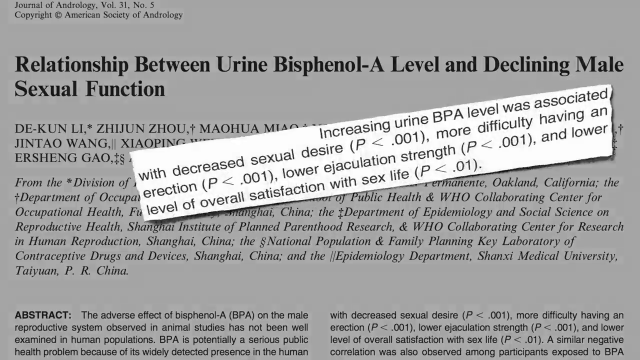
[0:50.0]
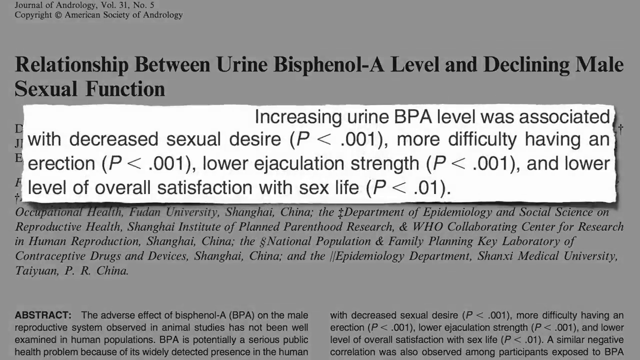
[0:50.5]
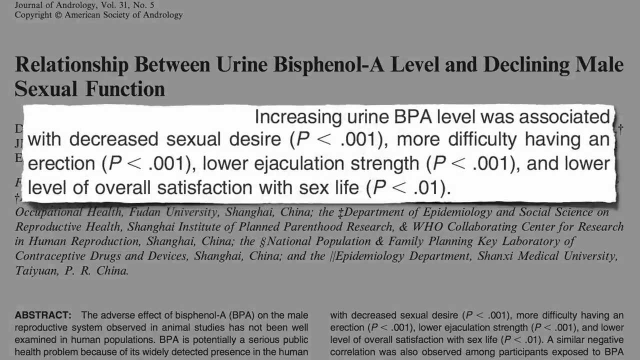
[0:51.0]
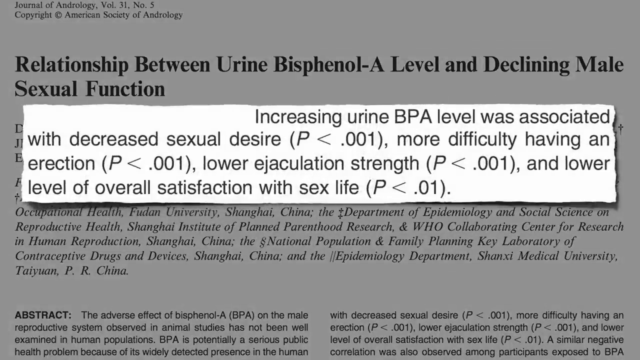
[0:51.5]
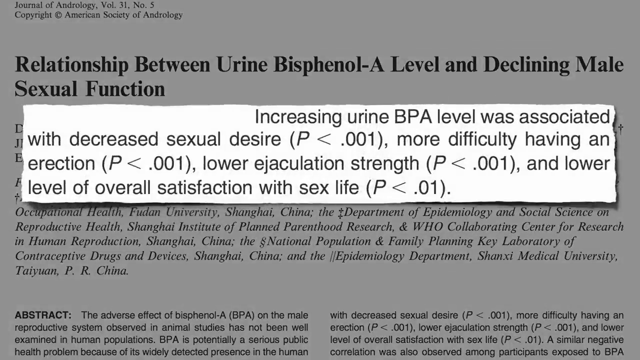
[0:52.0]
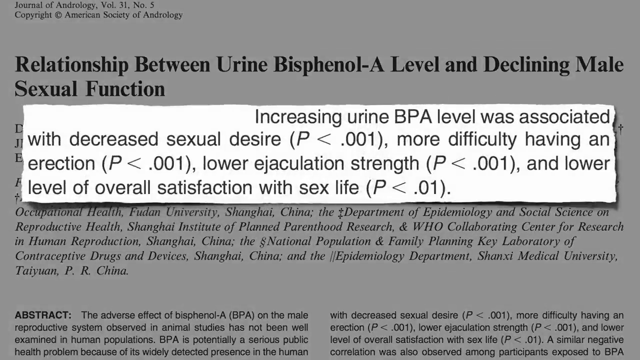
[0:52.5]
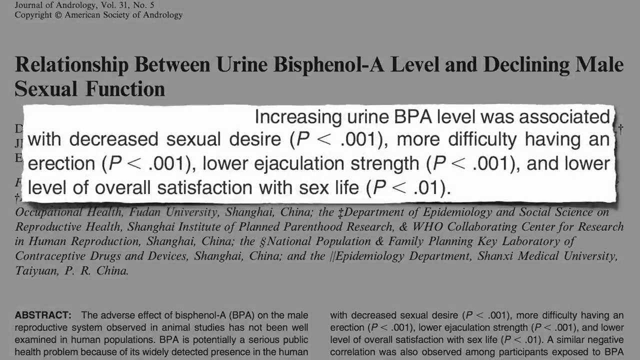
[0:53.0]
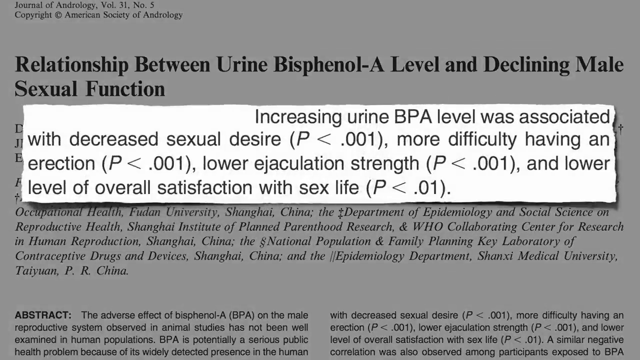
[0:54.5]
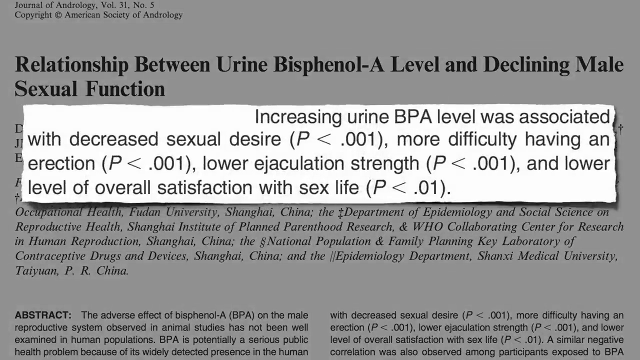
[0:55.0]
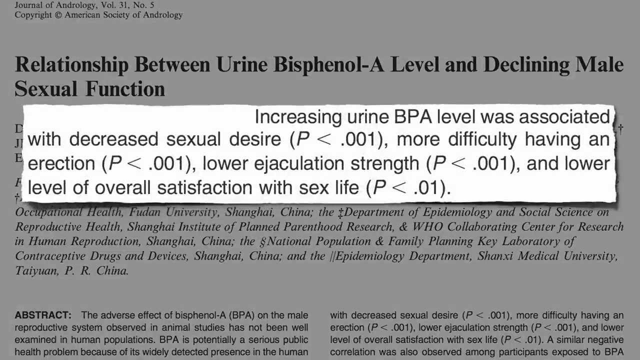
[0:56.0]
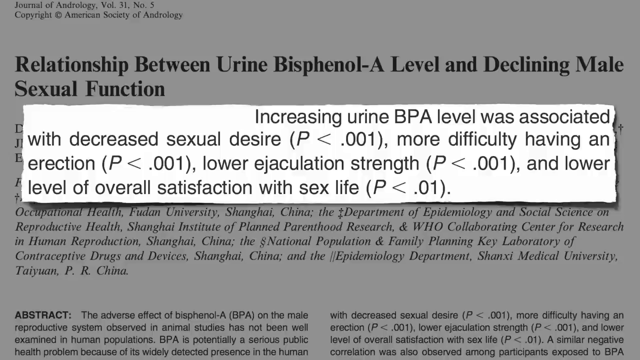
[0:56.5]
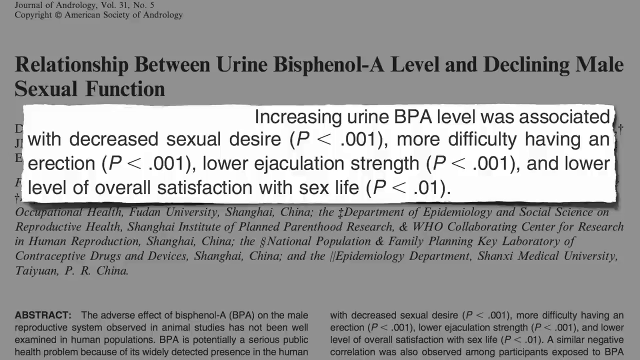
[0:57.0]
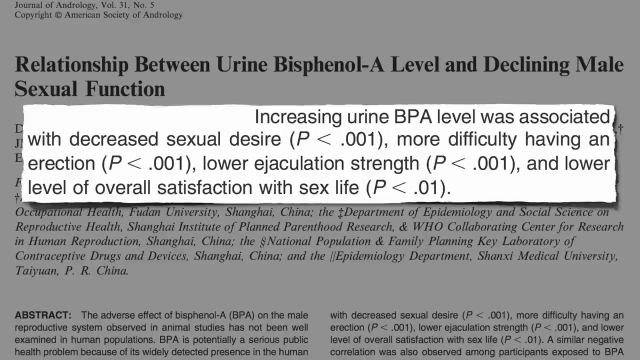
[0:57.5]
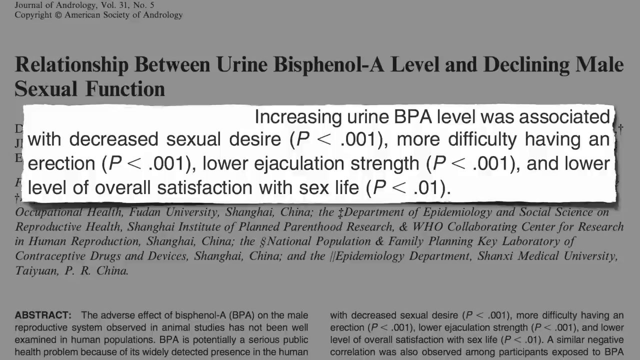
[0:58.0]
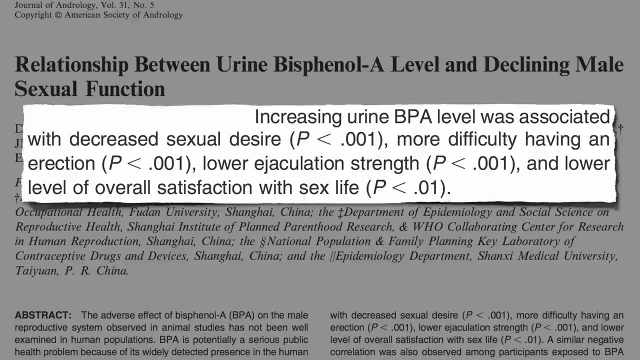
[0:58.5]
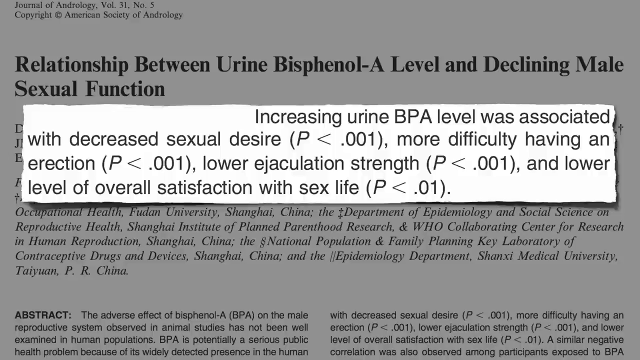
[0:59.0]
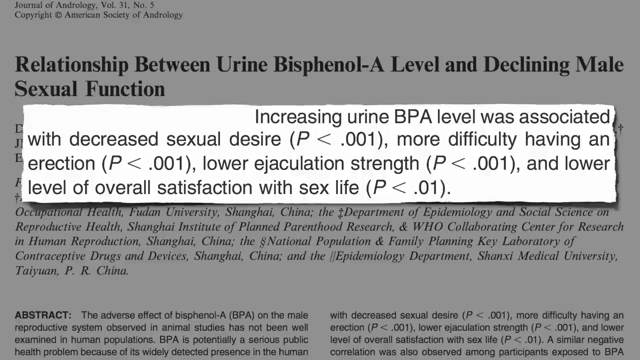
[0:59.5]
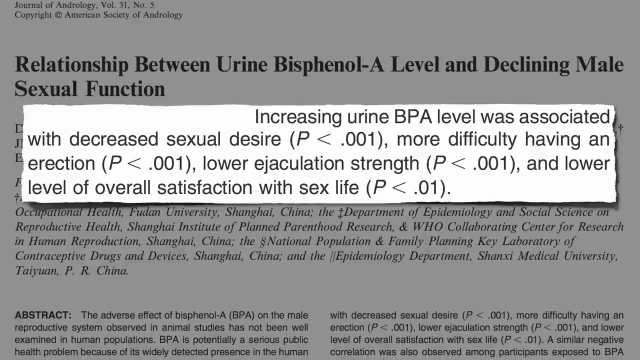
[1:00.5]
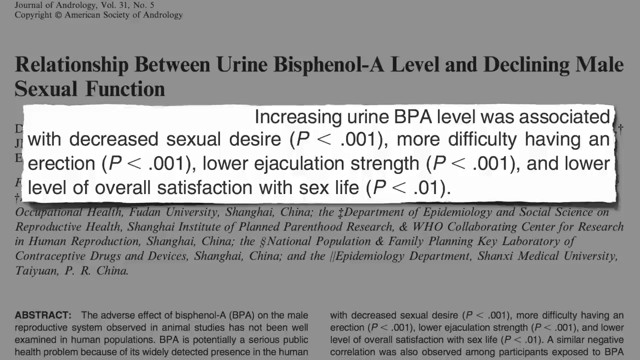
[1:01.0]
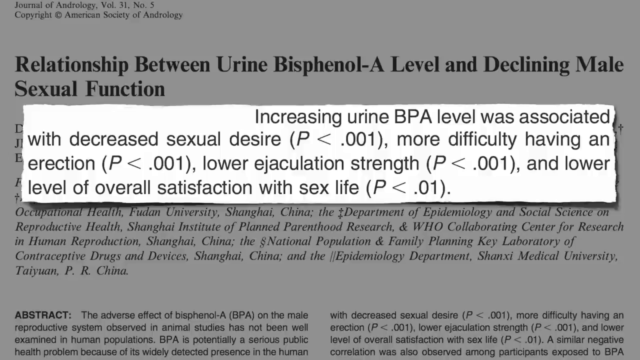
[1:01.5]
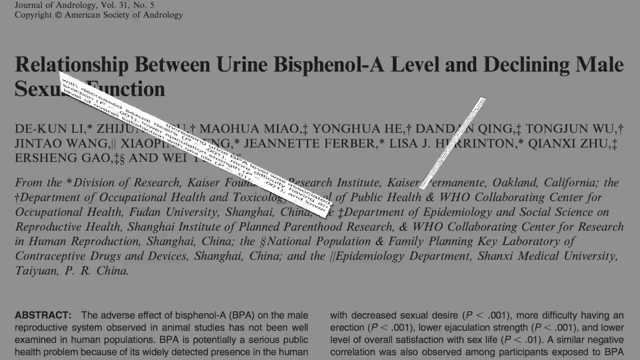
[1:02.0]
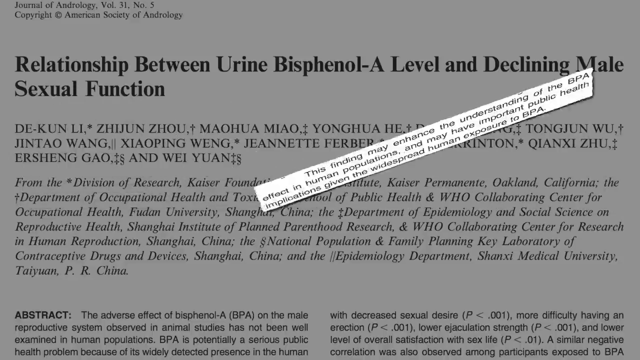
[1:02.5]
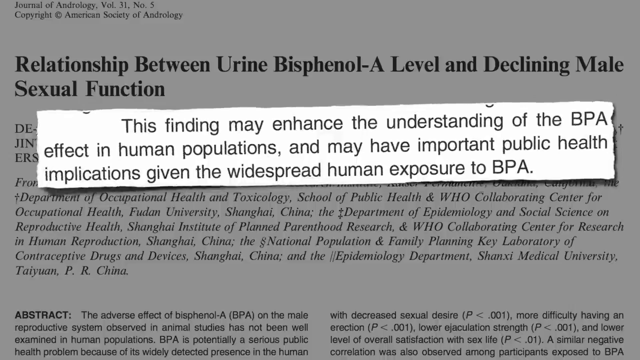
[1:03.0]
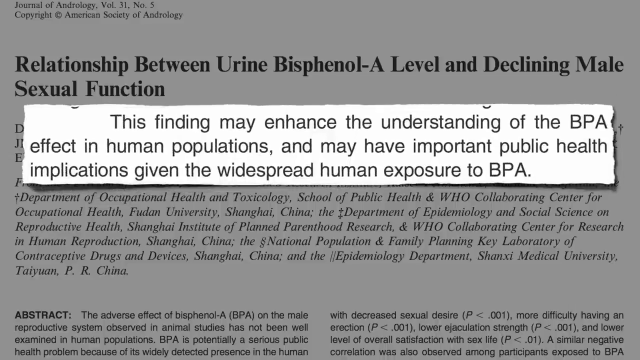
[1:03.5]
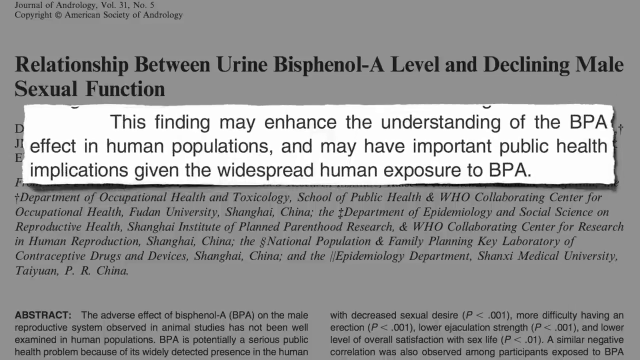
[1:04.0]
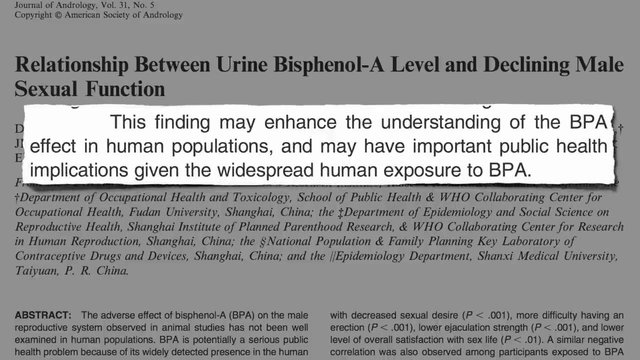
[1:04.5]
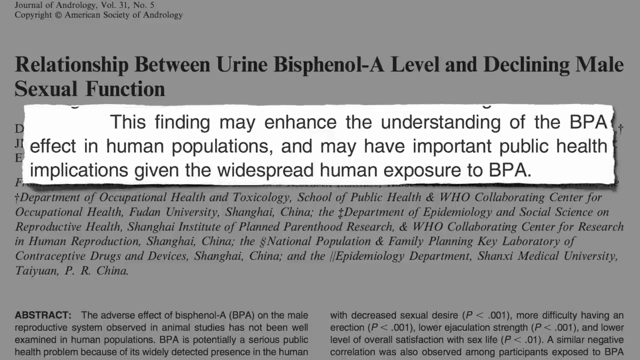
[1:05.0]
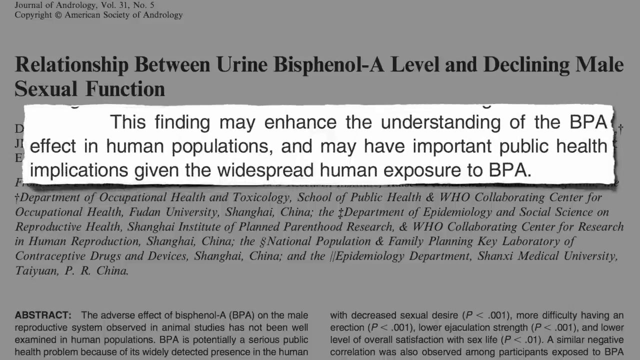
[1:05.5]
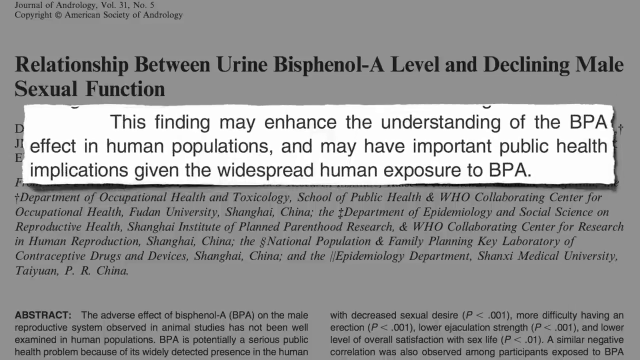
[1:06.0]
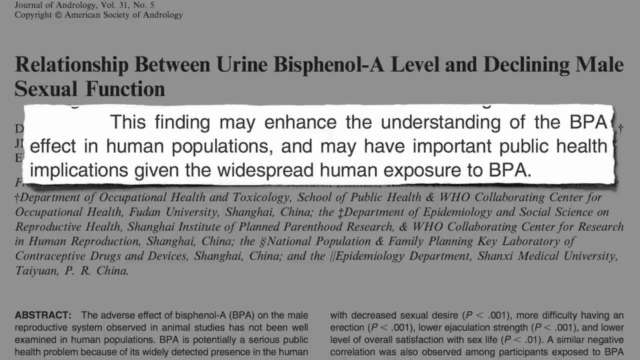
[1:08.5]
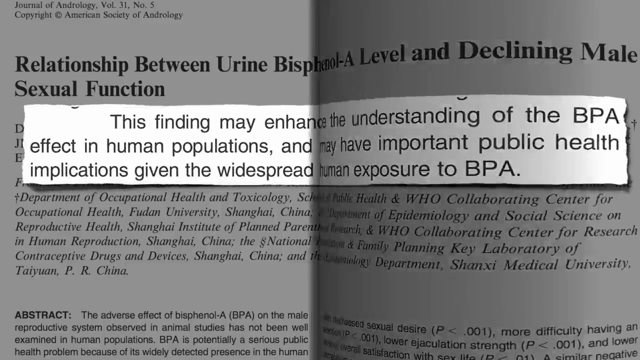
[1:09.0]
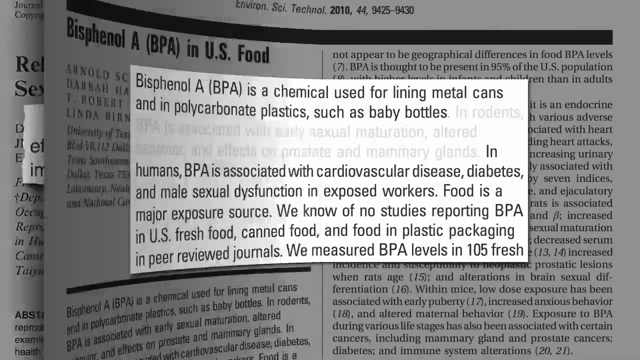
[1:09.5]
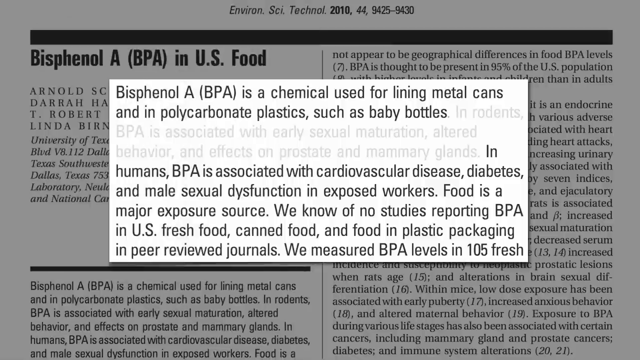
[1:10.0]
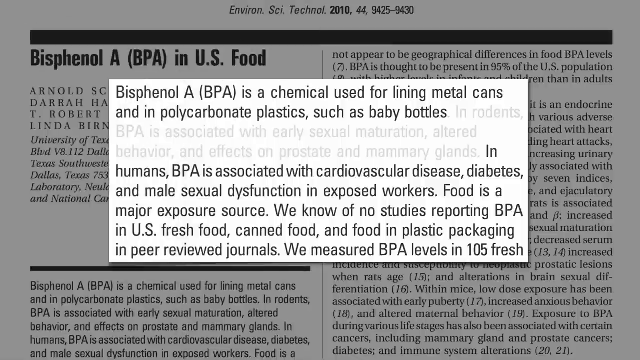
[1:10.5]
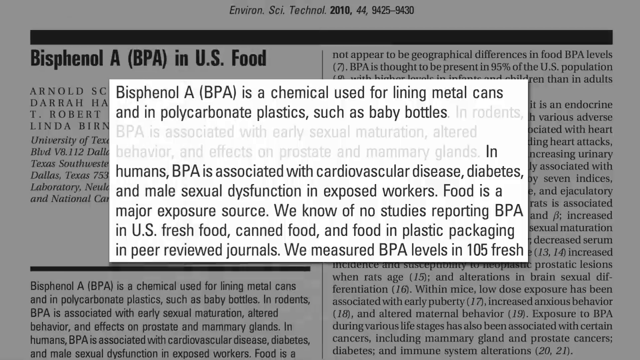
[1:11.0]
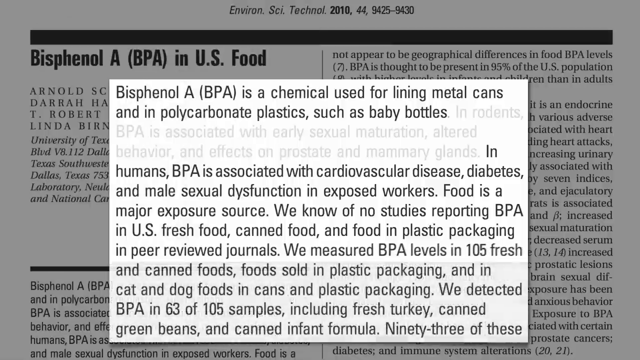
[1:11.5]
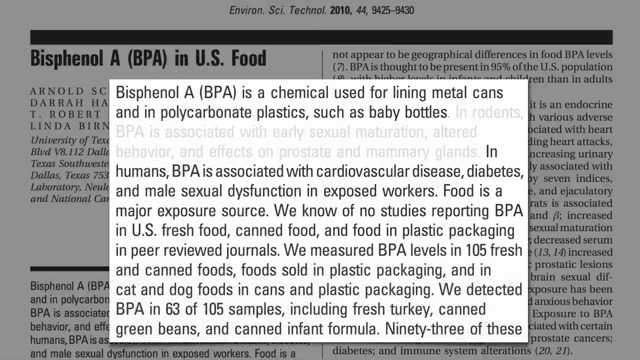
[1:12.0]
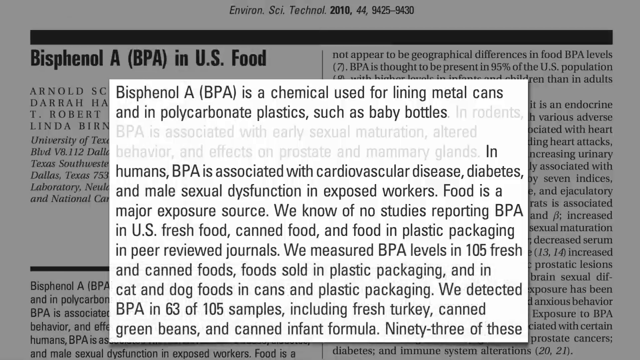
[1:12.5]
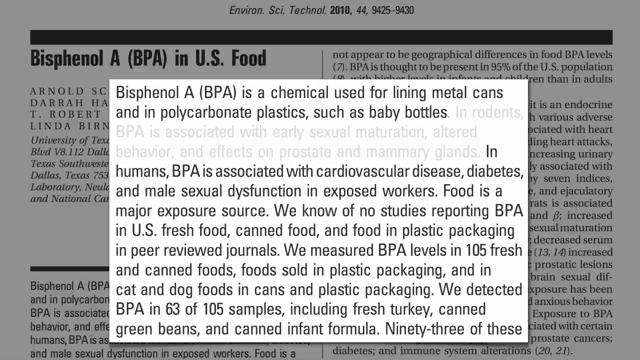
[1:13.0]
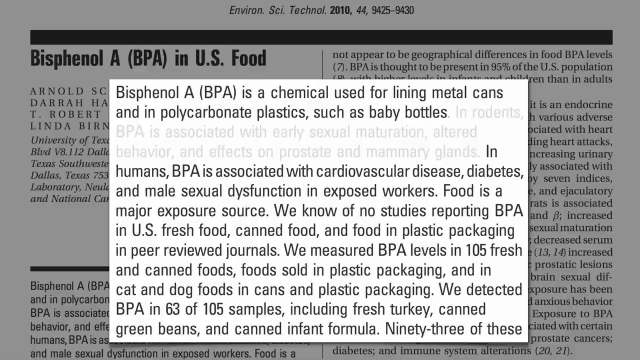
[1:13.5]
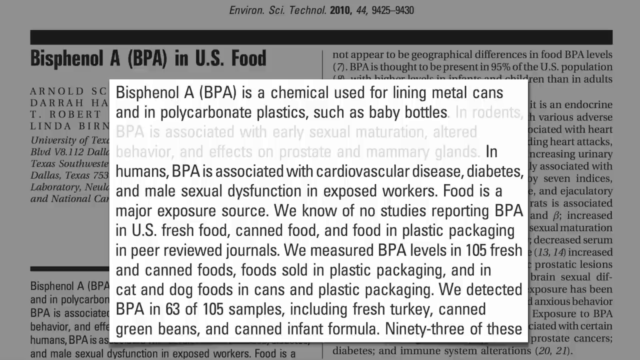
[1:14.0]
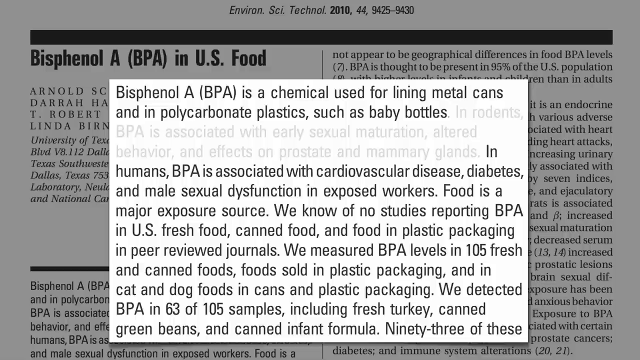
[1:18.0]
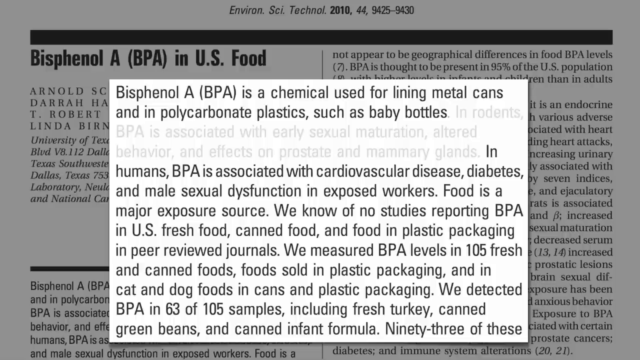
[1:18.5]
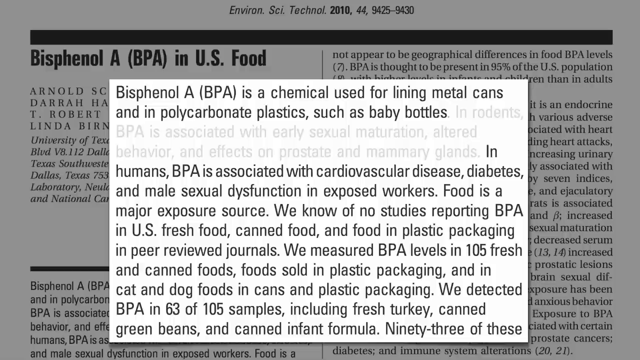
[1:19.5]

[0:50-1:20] A page that looks like a research study, possibly in a presentation, is shown with a gray background. Gray text reads "Journal of Andrology, Volume 31, No. 5, Copyright American Society of Andrology", and big black letters read "Relationship between urine bisphenol A level and declining male sexual function". The names of the people involved and a whole paragraph beneath are covered by a white rectangle set kind of at an angle across the page, holding a paragraph: "Increasing urine BPA level was associated with decreased sexual desire, P < .001. More difficulty having an erection, P < .001. Lower ejaculation strength, P < .001. And lower level of overall satisfaction with sex life, P < .001." The rectangle then comes up further onto the page, level with it horizontally, and stays for a few seconds. It then goes away and is replaced by more text in the box: "This finding may enhance understanding of the BPA effect in human populations and may have important public health implications given the widespread human exposure to BPA." After a pause, a line appears down the full page and it turns like a page in a book. Another rectangle appears in the middle. At the top, on a white background, the page reads "Environsci Technol 2010-44-9425-9430", with a black bar under it and the text "Bisphenol A BPA in US food", which is covered by the box. The box reads "Bisphenol A BPA is a chemical used for lining metal cans and in polycarbonate plastics such as baby bottles. In rodents, BPA is associated with early sexual maturation, altered behavior, and effects on prostate and mammary glands. In humans, BPA is associated with cardiovascular disease, diabetes, and male sexual dysfunction in exposed workers. Food is a major exposure source. We know of no studies reporting BPA in US fresh food, canned food, and food in plastic packaging in peer reviewed journals. We measured BPA levels in 105 fresh". More text then comes up: "and canned foods, foods sold in plastic packaging, and in cat and dog foods and cans and plastic packaging. We detected BPA in 63 of 105 samples, including fresh turkey, canned green beans, and canned infant formula. 93 of these", where the paragraph is cut off.